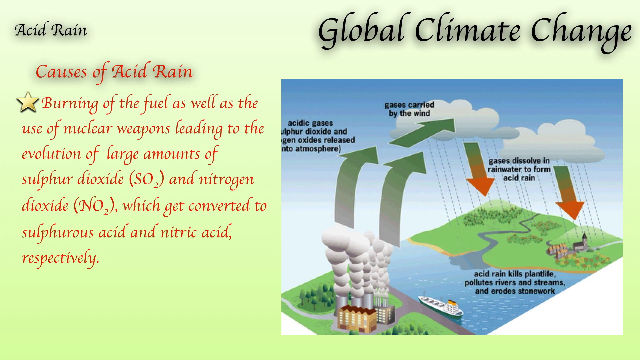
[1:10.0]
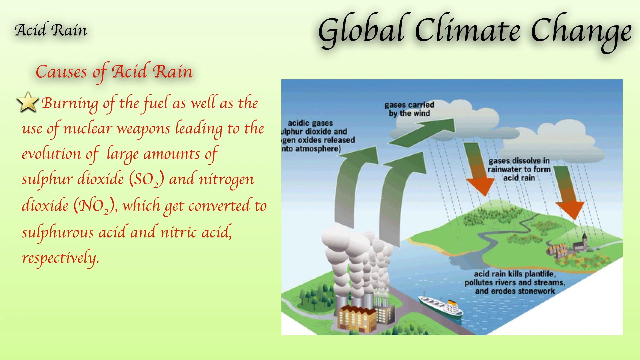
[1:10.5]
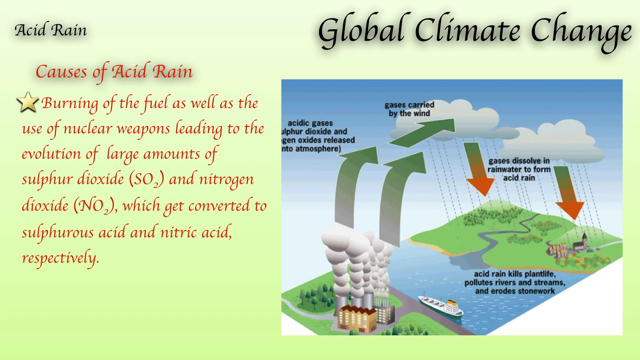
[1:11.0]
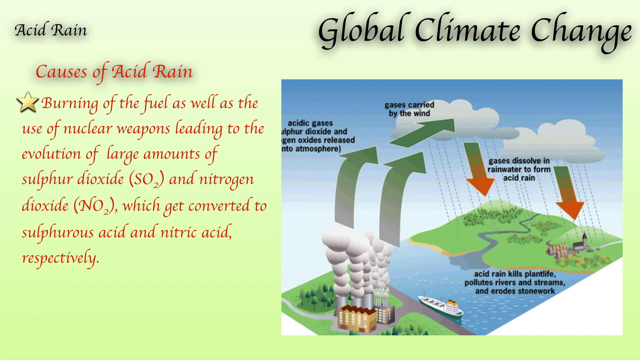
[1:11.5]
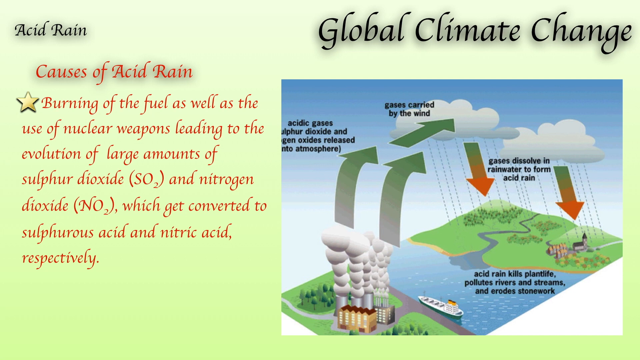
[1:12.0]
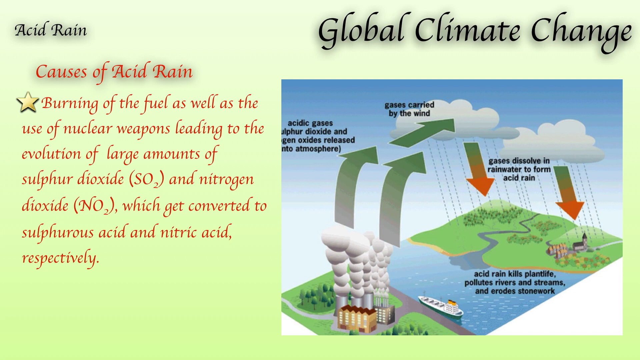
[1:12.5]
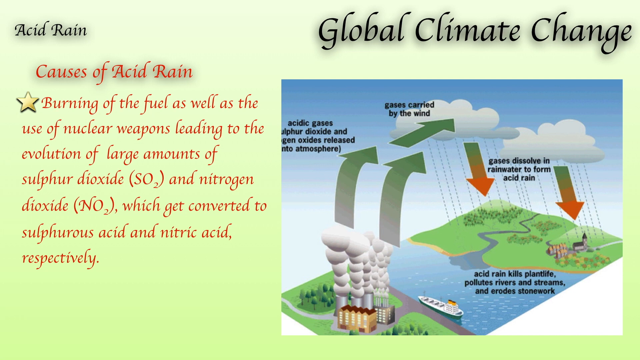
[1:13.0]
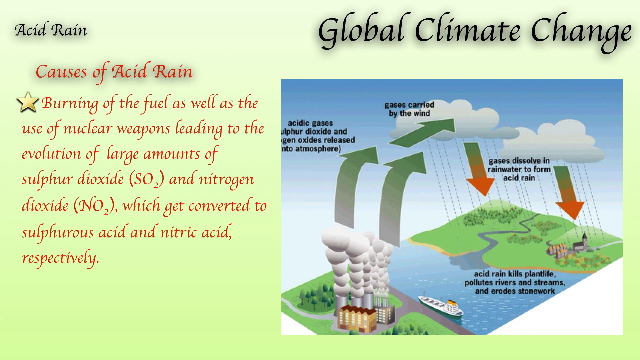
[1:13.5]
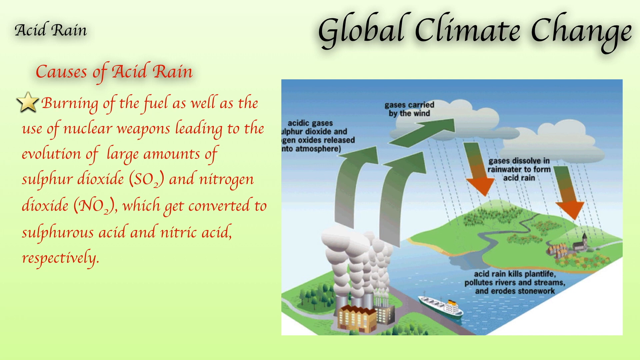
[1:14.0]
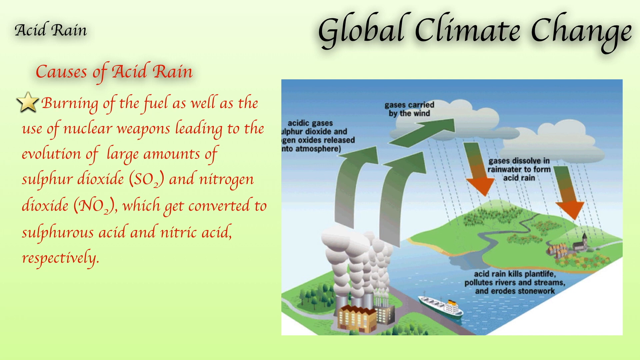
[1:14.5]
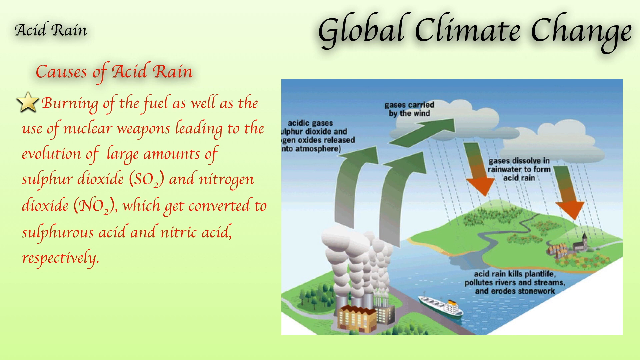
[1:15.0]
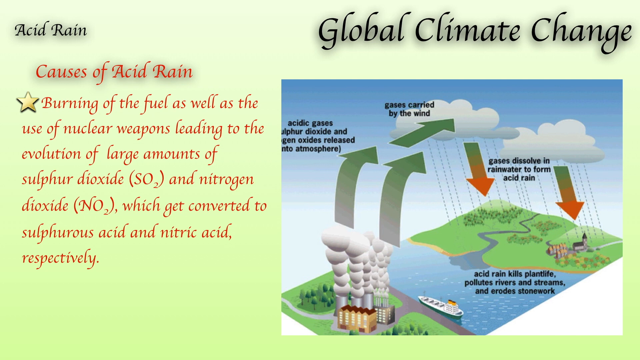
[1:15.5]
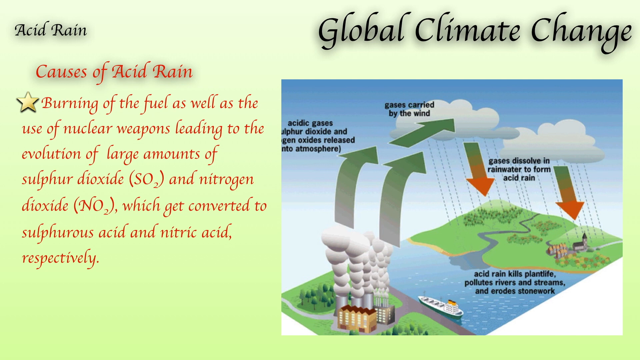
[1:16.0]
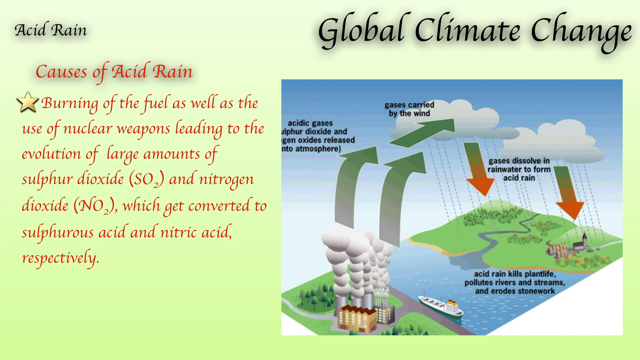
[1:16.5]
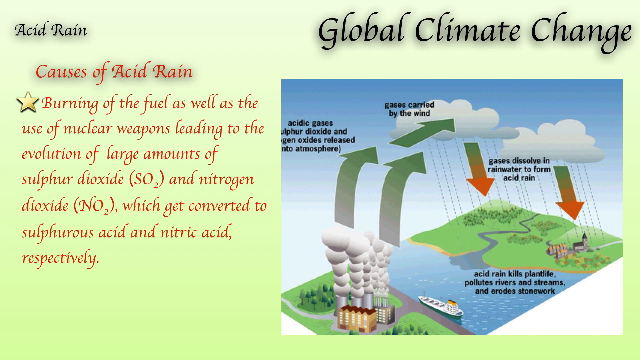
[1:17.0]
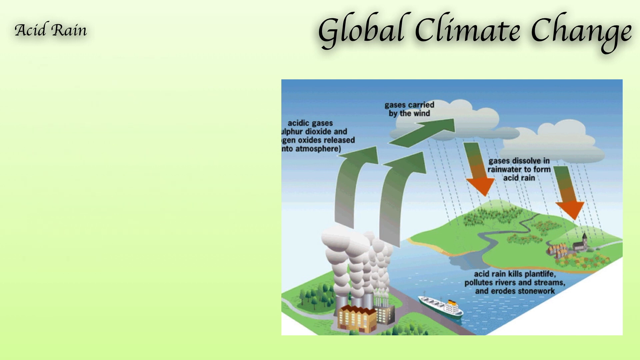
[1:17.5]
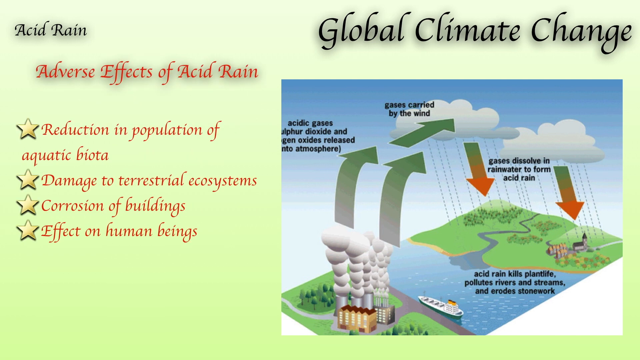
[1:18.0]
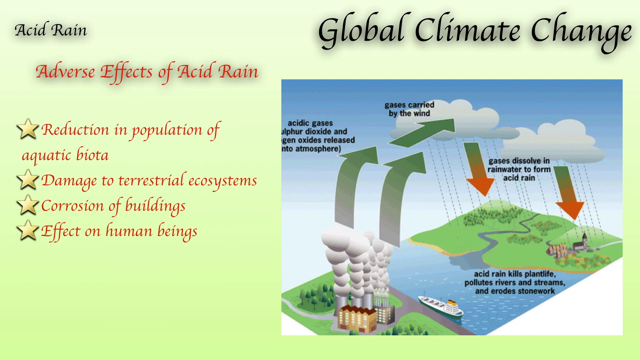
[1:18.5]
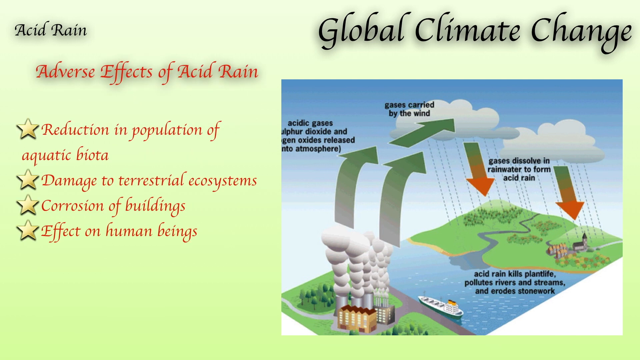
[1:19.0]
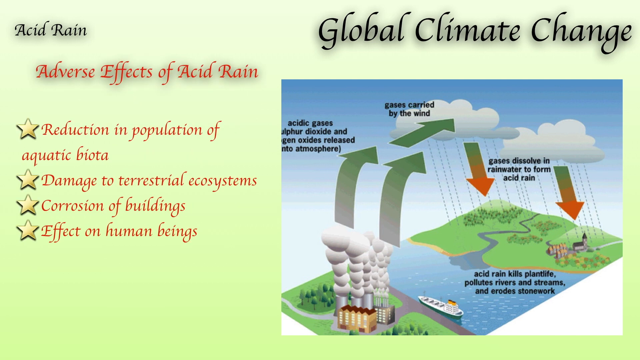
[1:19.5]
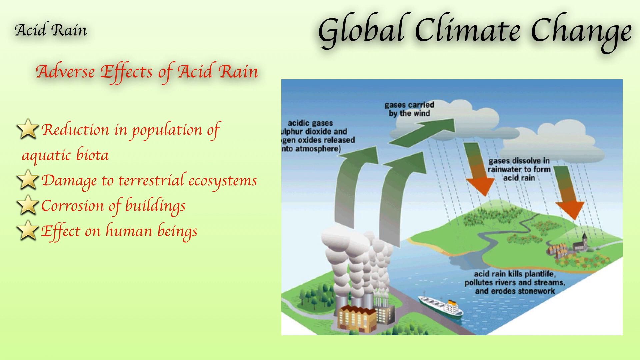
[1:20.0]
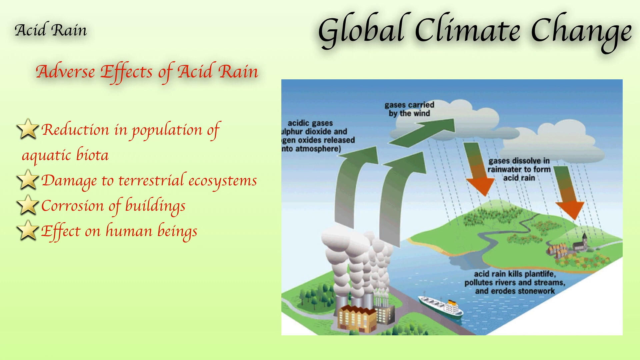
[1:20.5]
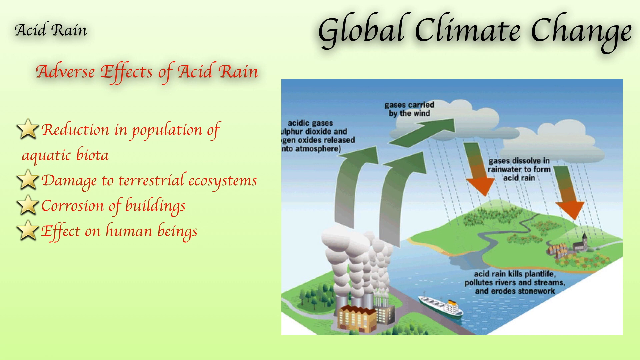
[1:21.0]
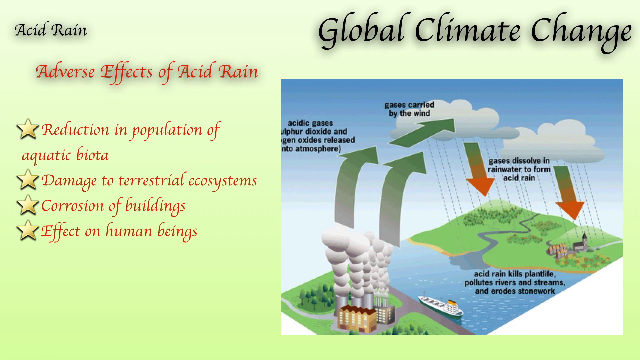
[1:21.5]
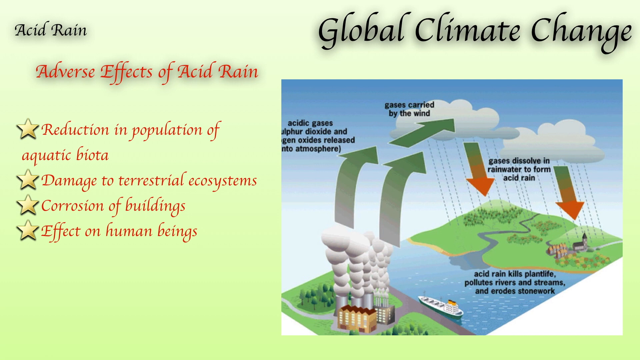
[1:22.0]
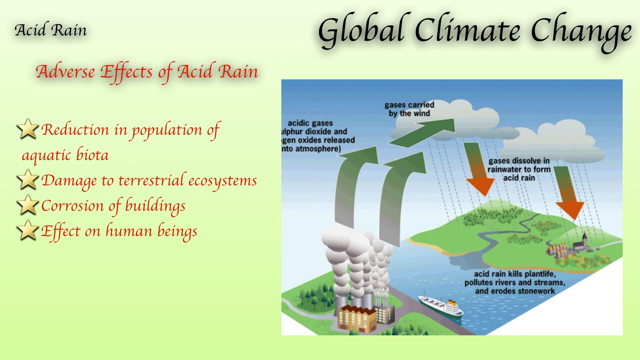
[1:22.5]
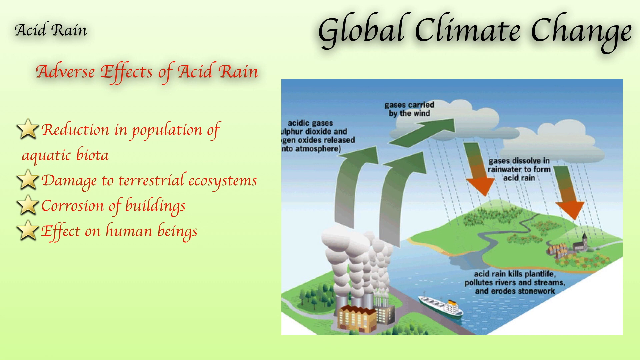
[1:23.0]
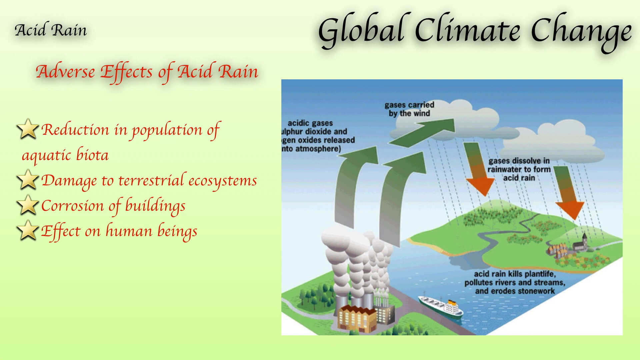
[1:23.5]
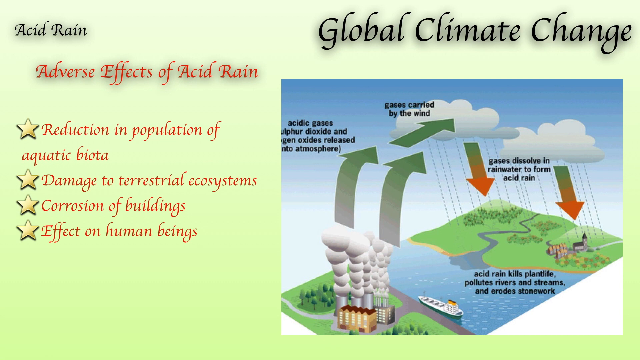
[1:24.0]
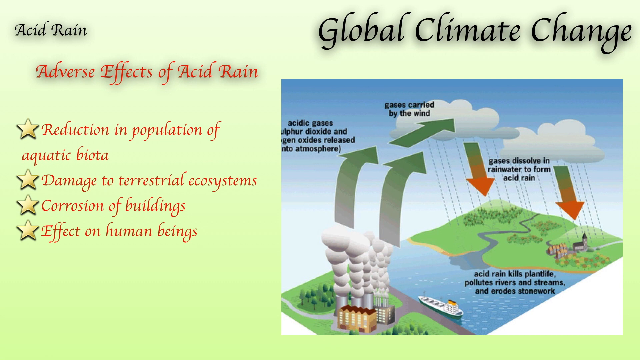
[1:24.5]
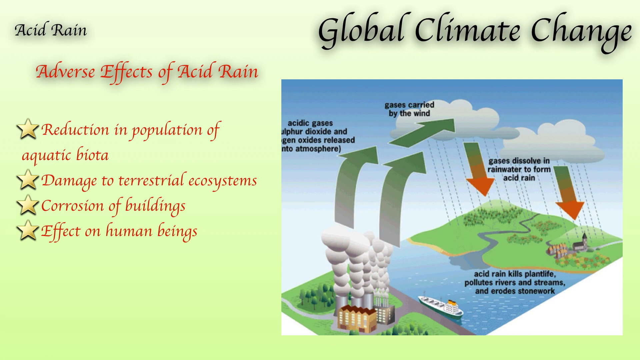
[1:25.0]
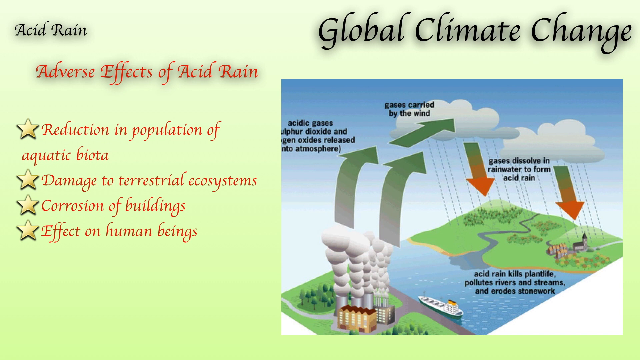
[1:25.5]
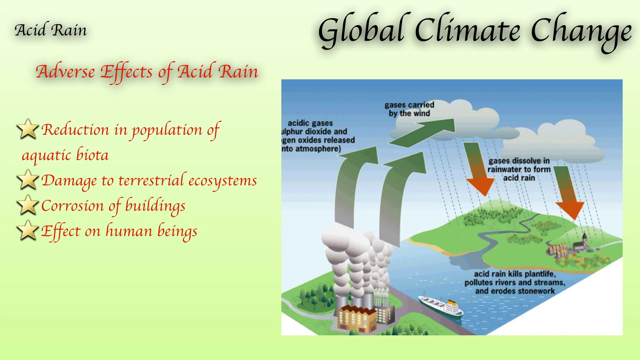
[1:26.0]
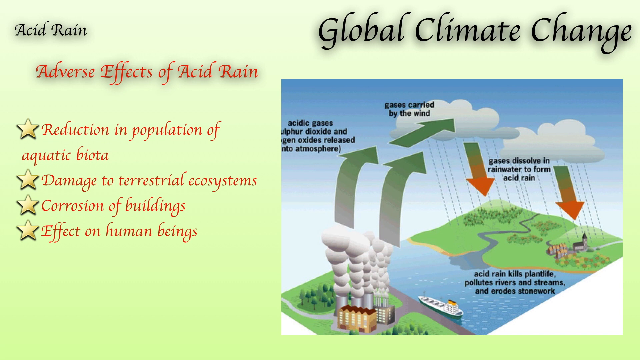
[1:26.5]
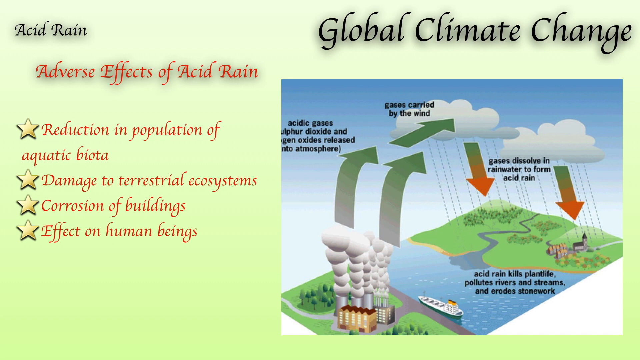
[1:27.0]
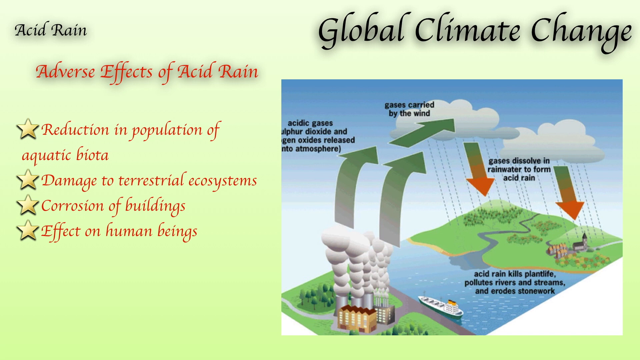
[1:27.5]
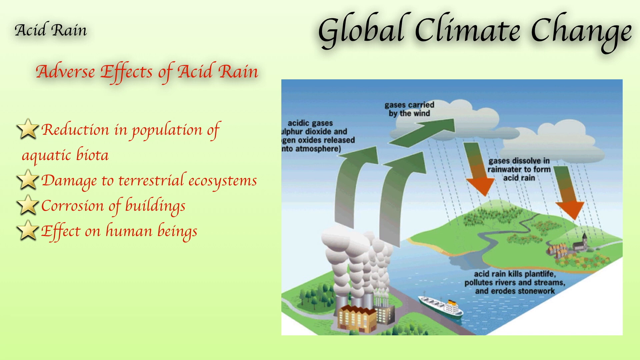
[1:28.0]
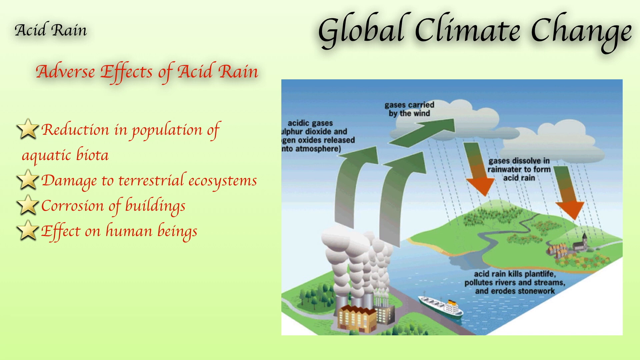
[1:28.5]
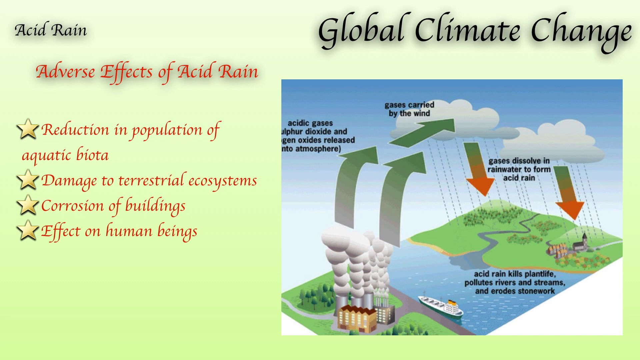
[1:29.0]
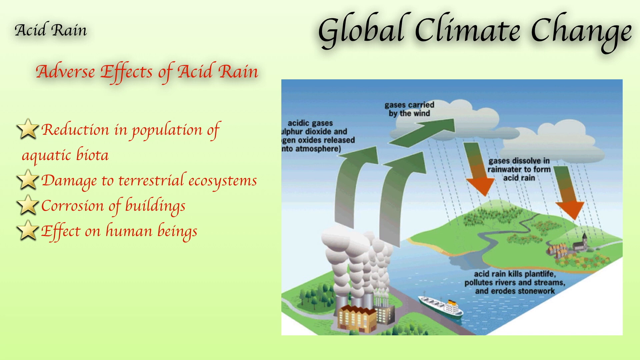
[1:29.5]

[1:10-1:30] Everything remains the same: the smaller black text "acid rain" on the top left, the red text on the causes of acid rain right below it with lots of information, "global climate change" in larger black text on the top right, and below it the image of the acid rain cycle with pollution, clouds and rain, with arrows and black text describing the process. This stays the same for about the first 8 seconds. Then the red text on the left changes to "the adverse effects of acid rain", with 4 stars for 4 pieces of information, in red text: "reduction in population of aquatic biota", "damage to terrestrial ecosystems", "corrosion of buildings", and "effects on human beings". The slide stays the same until the end of this part.